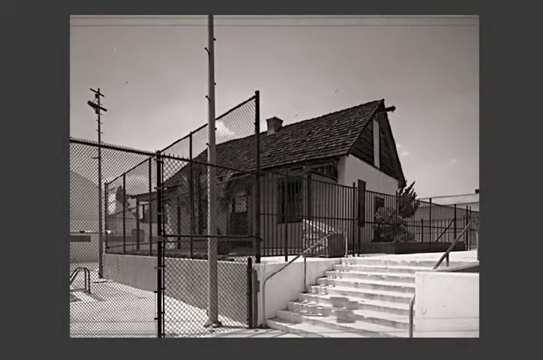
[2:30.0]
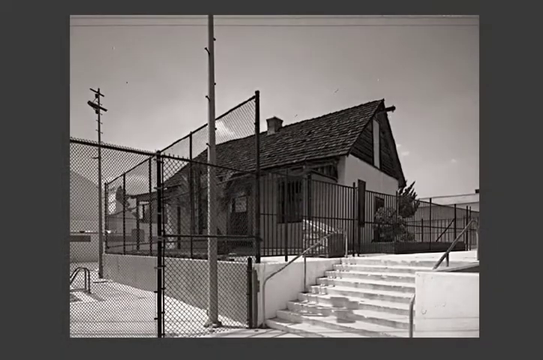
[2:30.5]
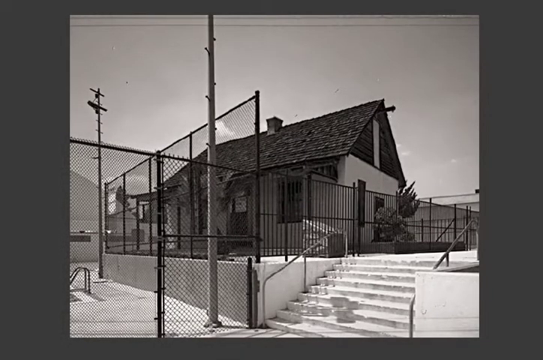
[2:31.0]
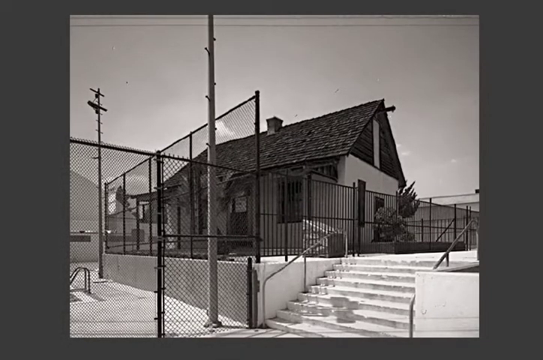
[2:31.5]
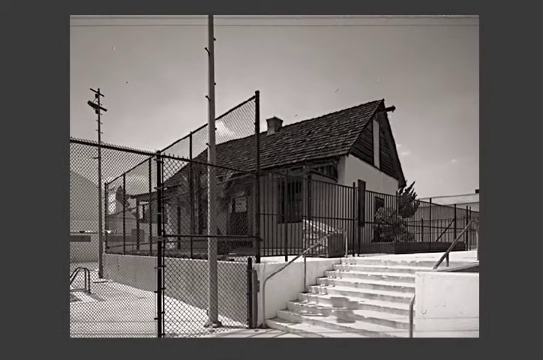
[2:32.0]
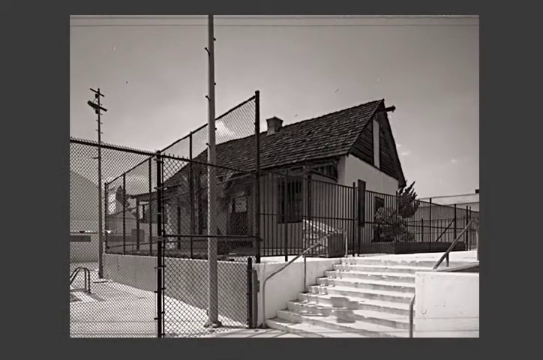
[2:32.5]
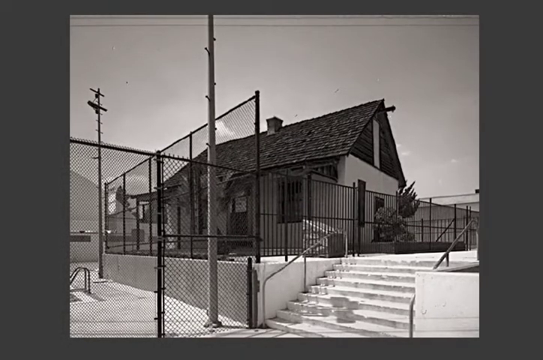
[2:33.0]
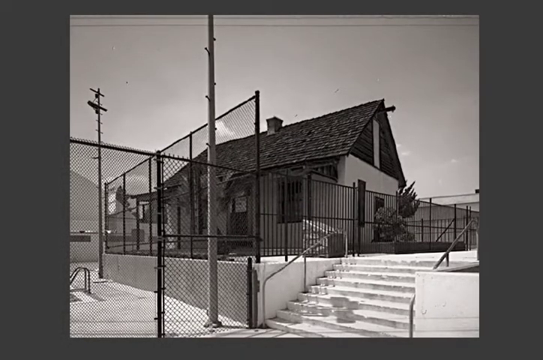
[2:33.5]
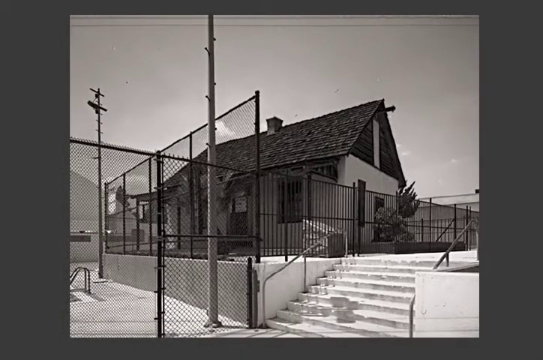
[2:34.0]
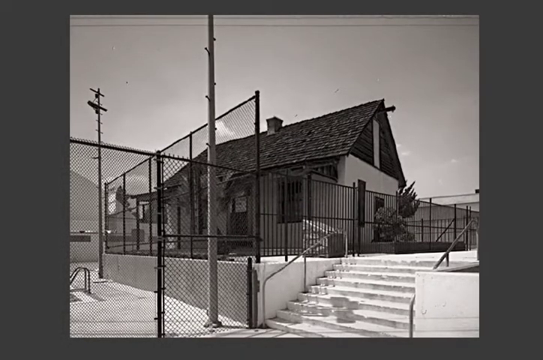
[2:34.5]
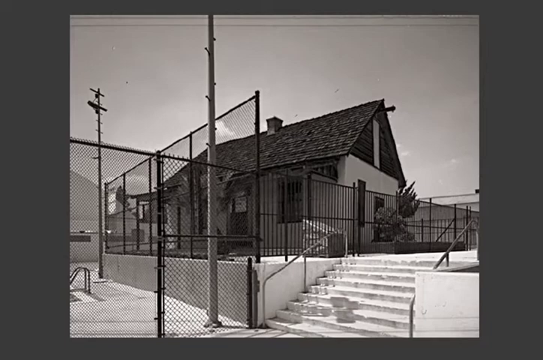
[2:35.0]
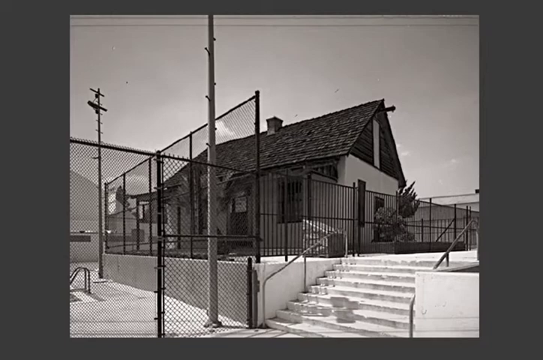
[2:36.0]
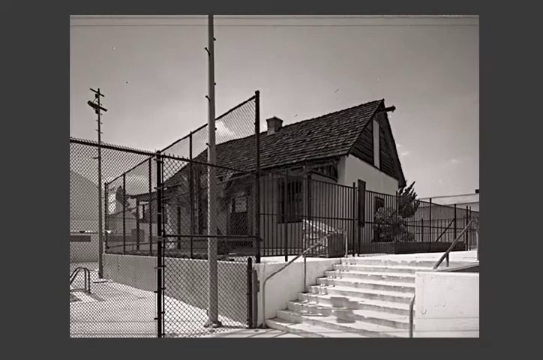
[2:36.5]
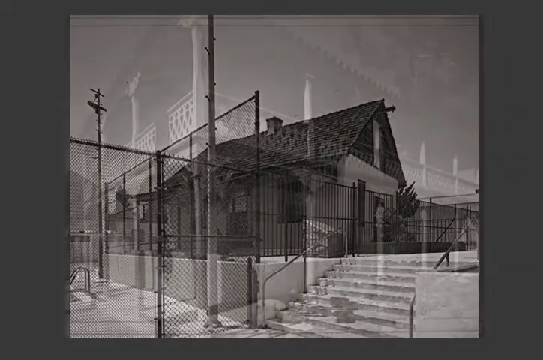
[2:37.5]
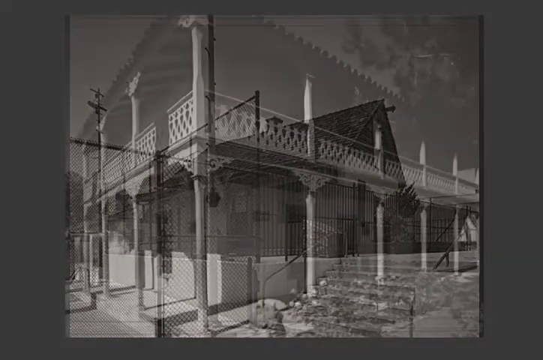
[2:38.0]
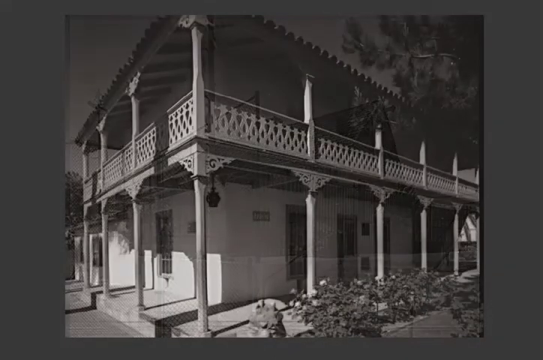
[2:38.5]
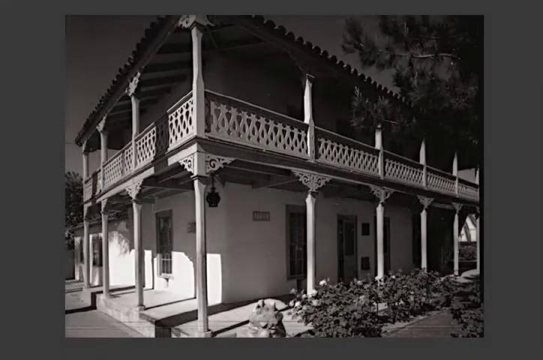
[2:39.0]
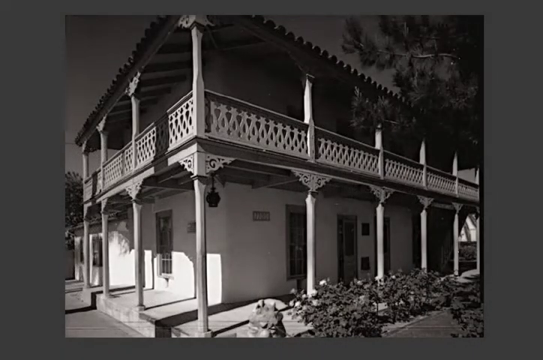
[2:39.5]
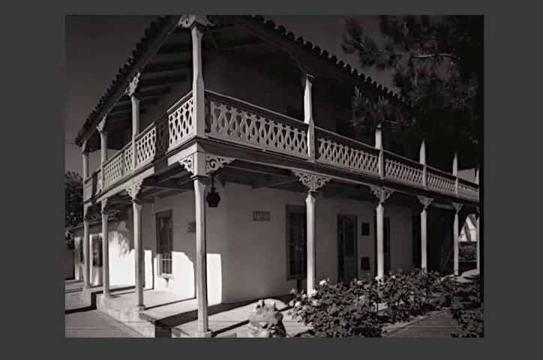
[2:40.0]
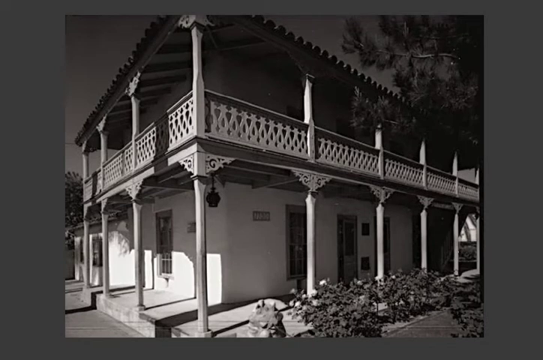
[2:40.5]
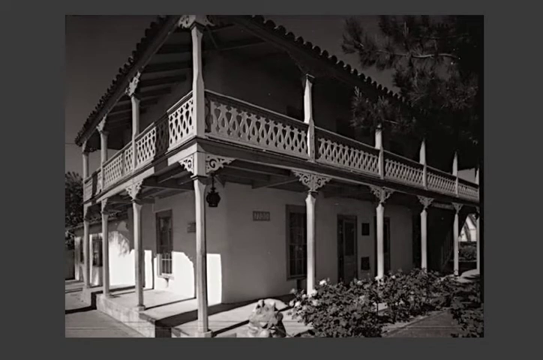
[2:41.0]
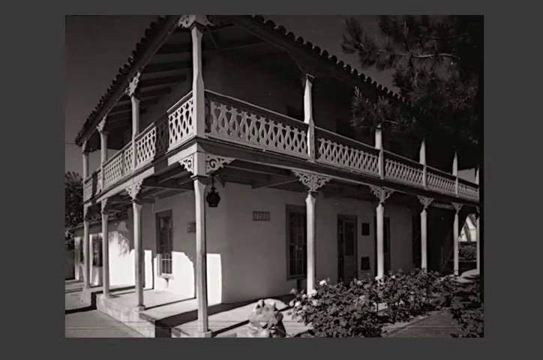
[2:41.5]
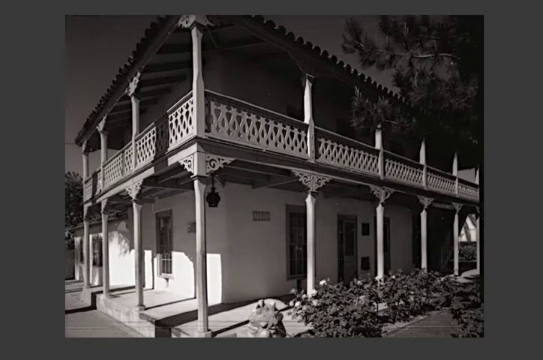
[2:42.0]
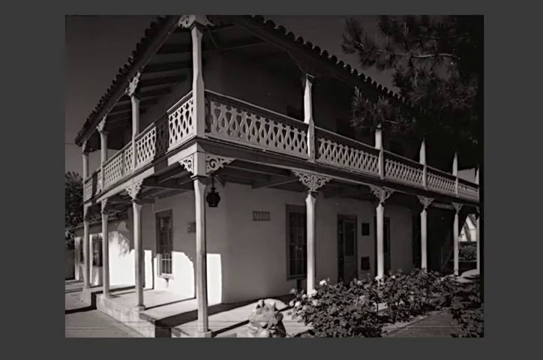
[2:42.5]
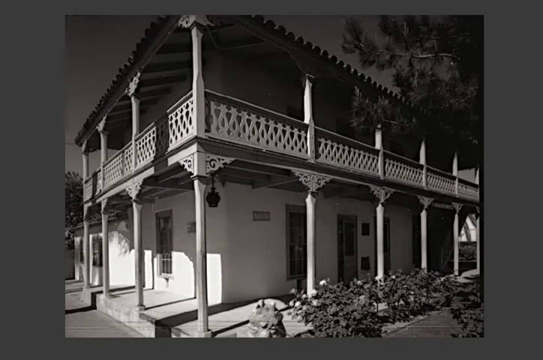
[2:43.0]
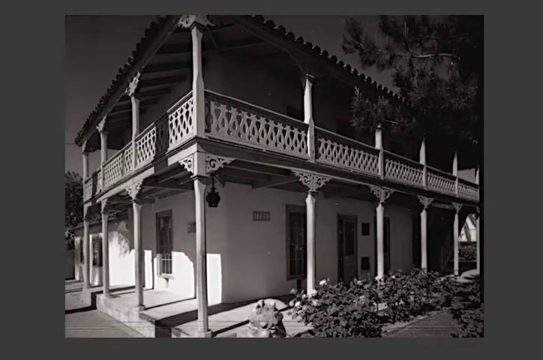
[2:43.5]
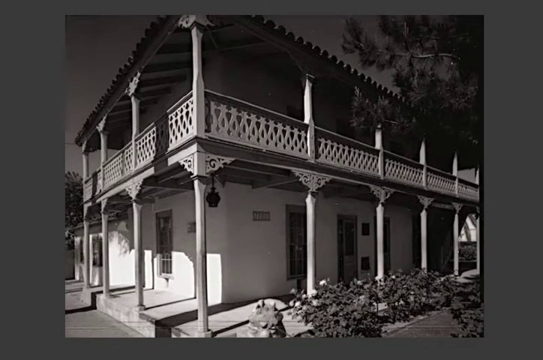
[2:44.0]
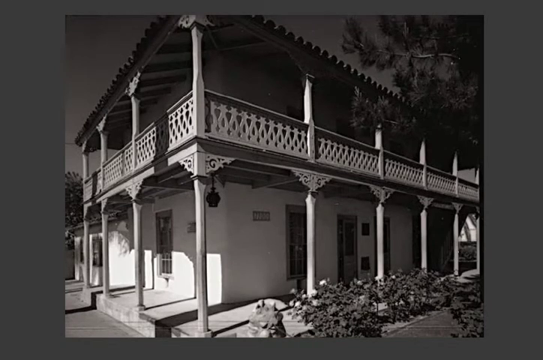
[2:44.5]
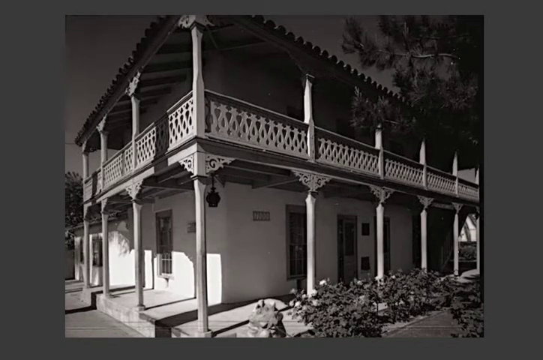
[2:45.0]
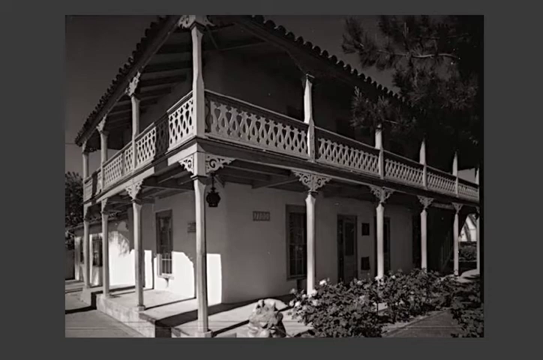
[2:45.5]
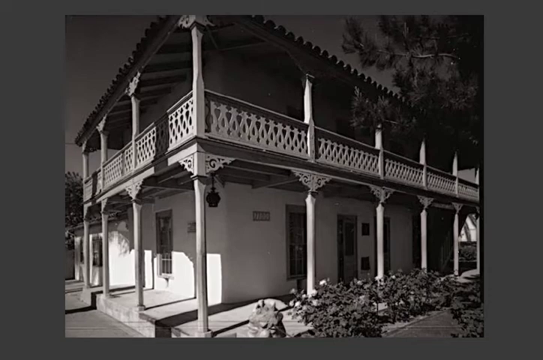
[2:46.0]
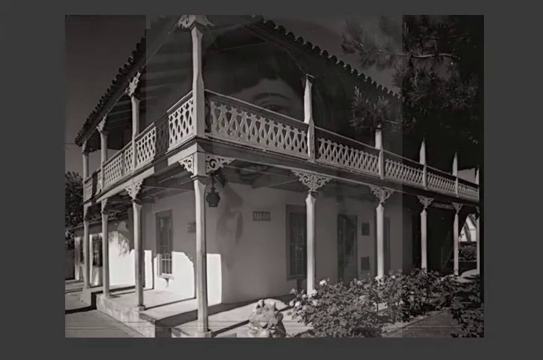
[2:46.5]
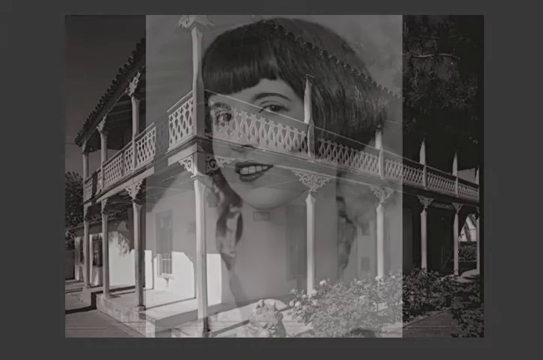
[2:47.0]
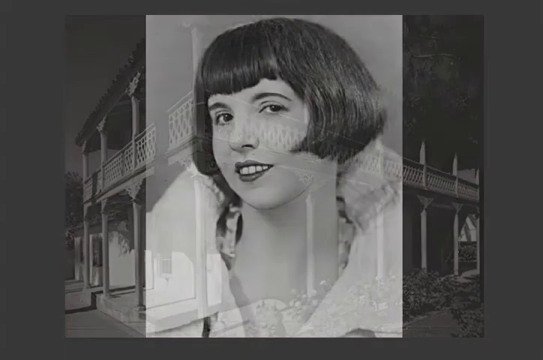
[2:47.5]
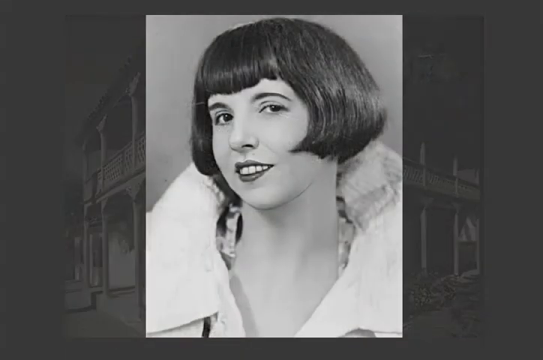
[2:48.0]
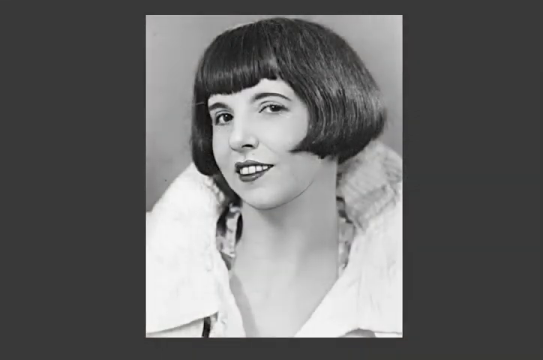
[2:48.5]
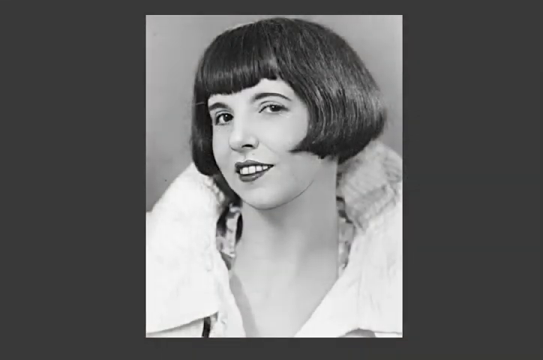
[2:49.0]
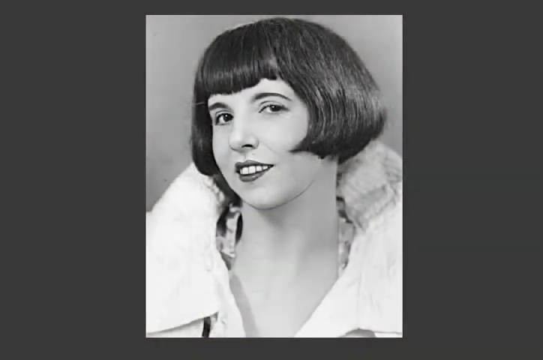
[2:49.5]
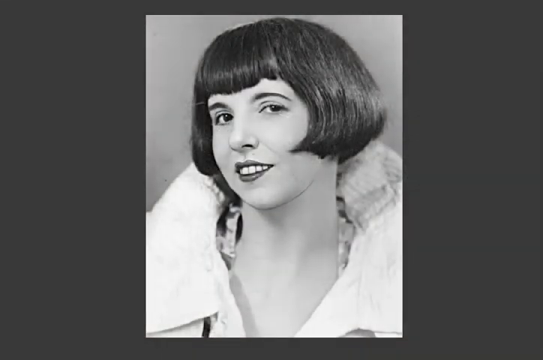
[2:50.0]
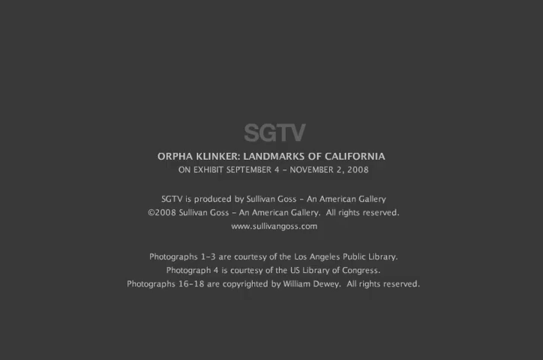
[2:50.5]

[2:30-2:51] Over a blurry background is a black and white photo of a Thatcher house, which seems to be white with a brown top and has a door off to the right-hand side. In the foreground looks to be a pool behind a chain link fence, and on the other side of the fence is a deck made of concrete with walk-up steps. This image is replaced by an old school mansion with two floors; the bottom floor looks painted white and the top floor is painted a darker color. In this black and white photo there is a garden on the right-hand side of the foreground along with a tree. The top balcony has latticework on its fence, the roof has terracotta shingles, and there are five windows on the bottom floor along with a door. The video then goes back to the initial picture of the woman with the bobbed haircut looking three quarters of the way towards the camera, in black and white. It is replaced by the grey letters "S-G-T-V", and underneath in white lettering it says "Orpho Klinker, Landmarks of California, on exhibit from September 4th to September 2nd of 2008." Credits state it was produced by the American Gallery, copyright 2008 for the American Gallery, that photos 1-3 are courtesy of the LA Public Library, photo 4 is from the US Congress, and photos 16-18 are copyrighted by William Dewey.